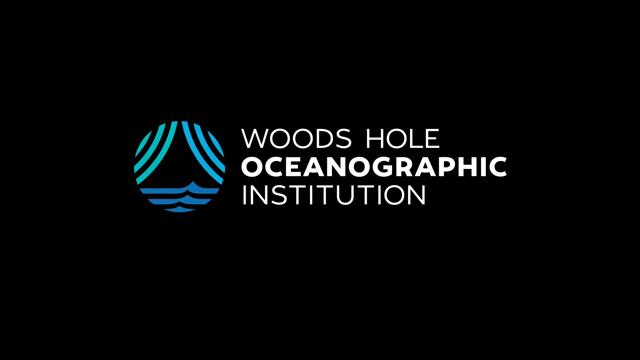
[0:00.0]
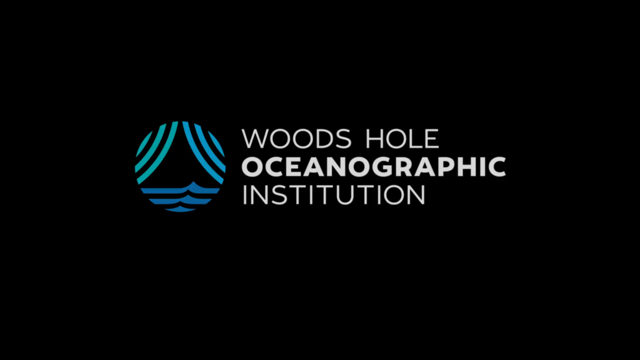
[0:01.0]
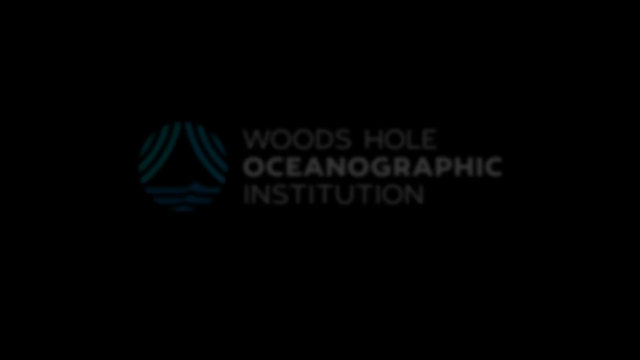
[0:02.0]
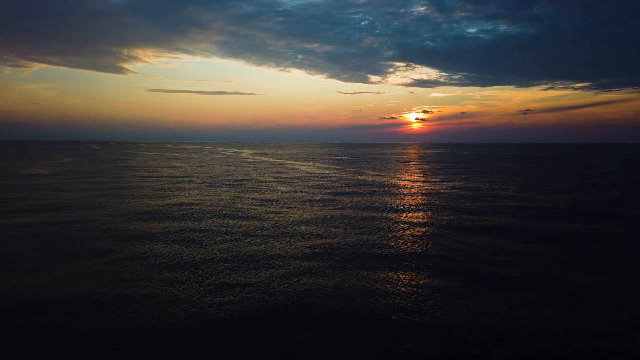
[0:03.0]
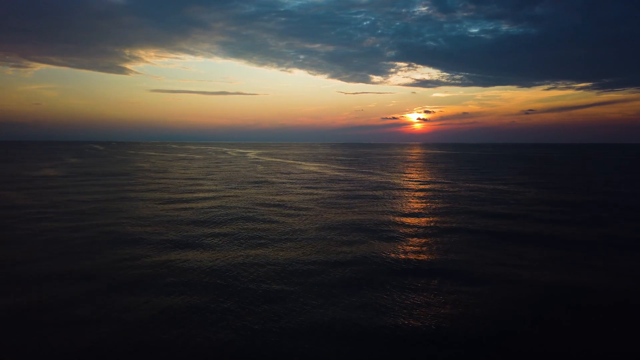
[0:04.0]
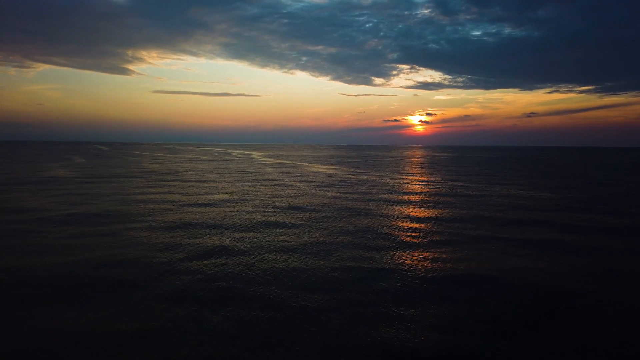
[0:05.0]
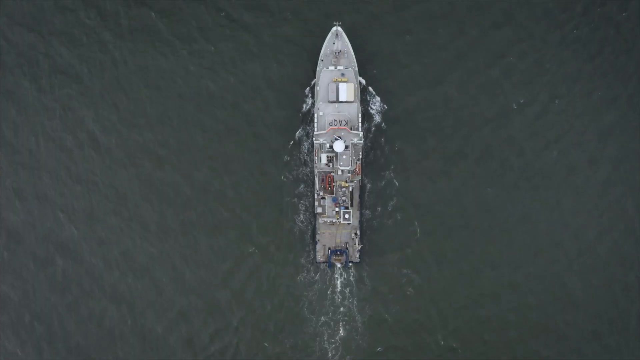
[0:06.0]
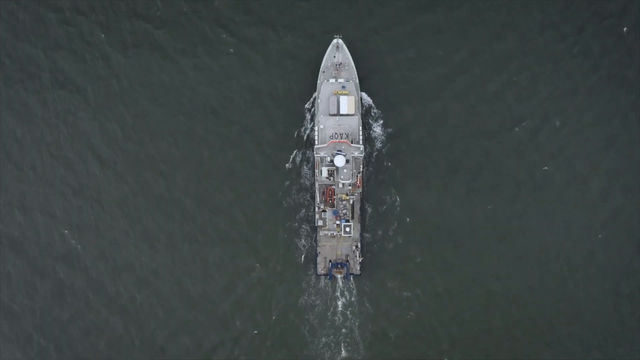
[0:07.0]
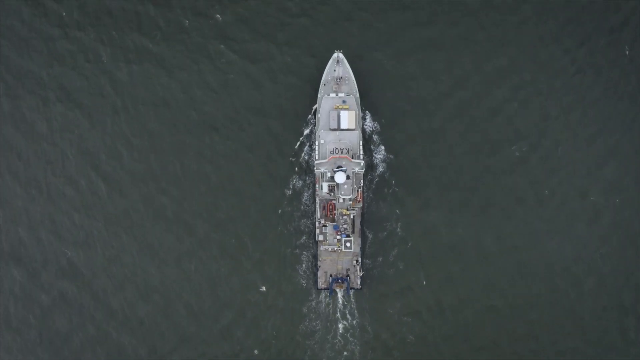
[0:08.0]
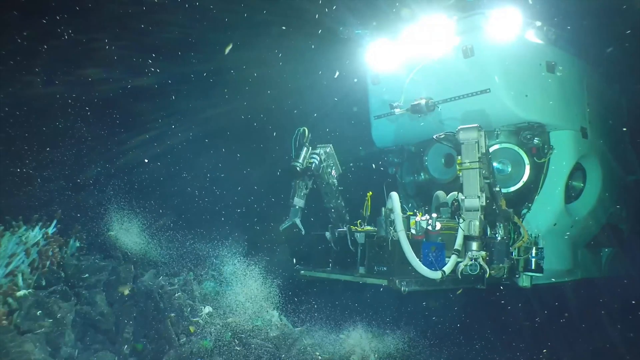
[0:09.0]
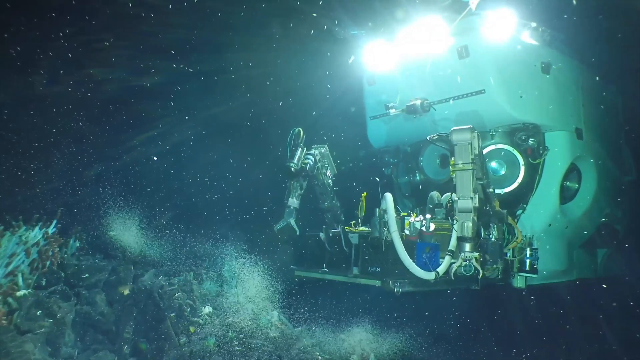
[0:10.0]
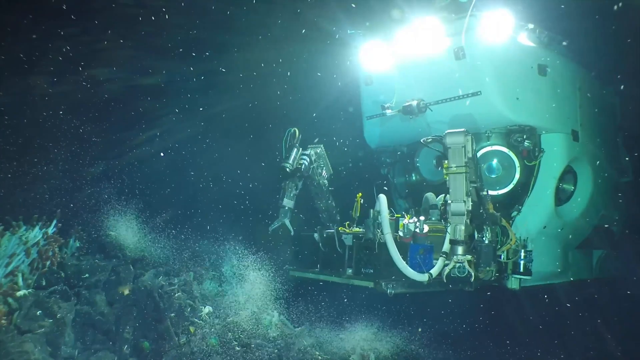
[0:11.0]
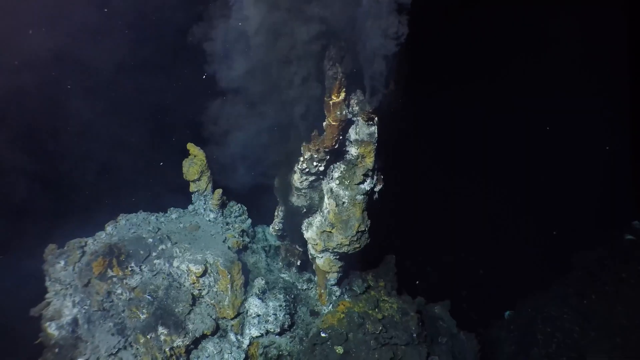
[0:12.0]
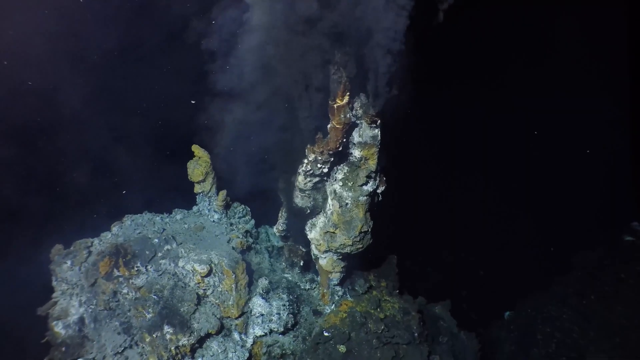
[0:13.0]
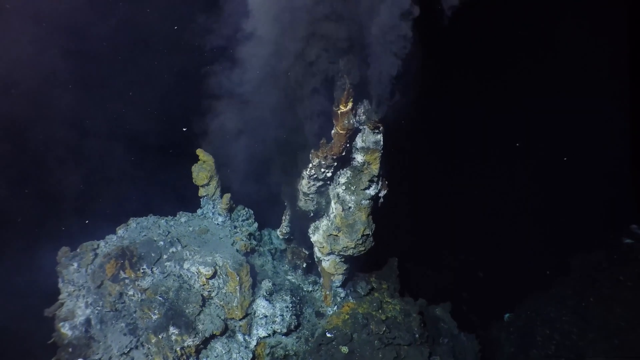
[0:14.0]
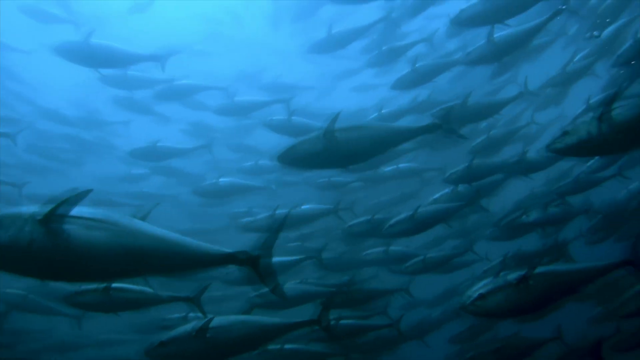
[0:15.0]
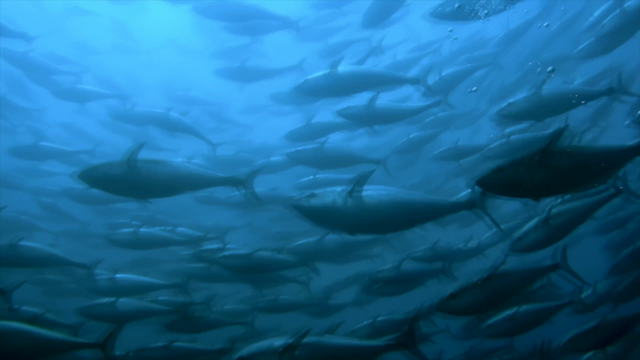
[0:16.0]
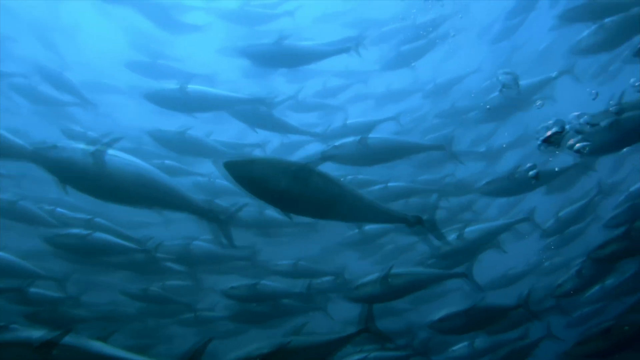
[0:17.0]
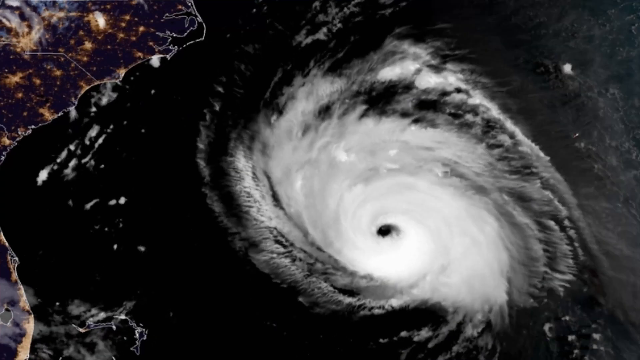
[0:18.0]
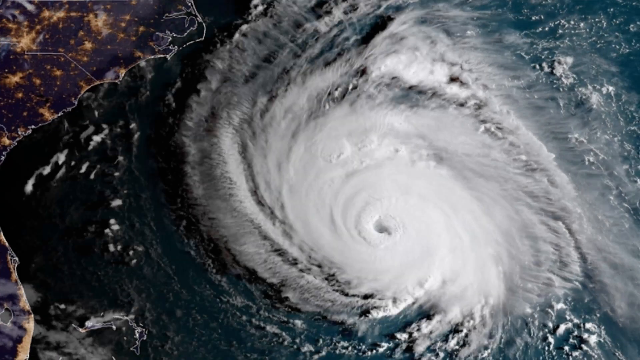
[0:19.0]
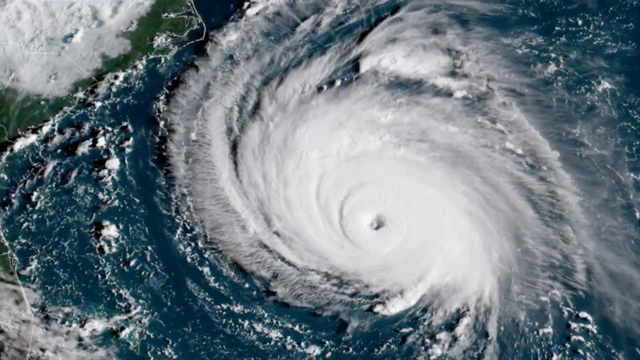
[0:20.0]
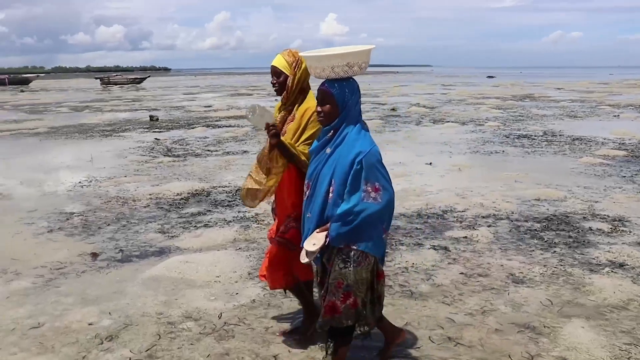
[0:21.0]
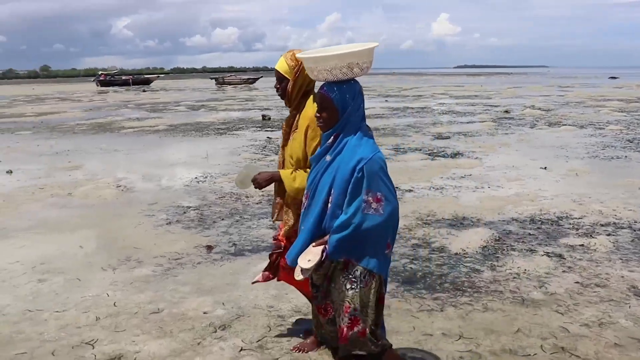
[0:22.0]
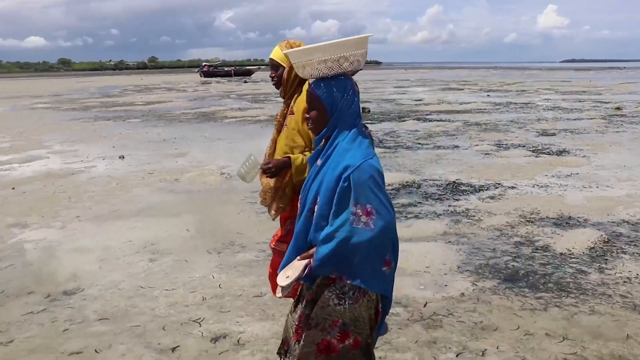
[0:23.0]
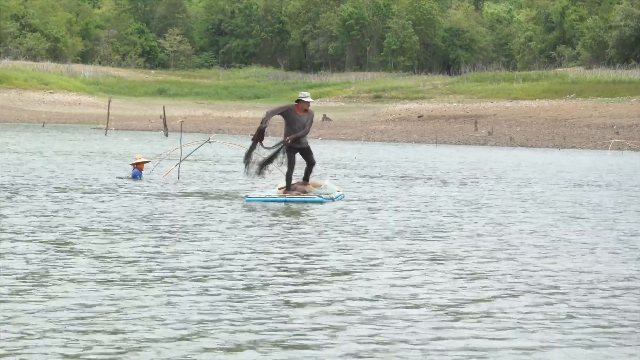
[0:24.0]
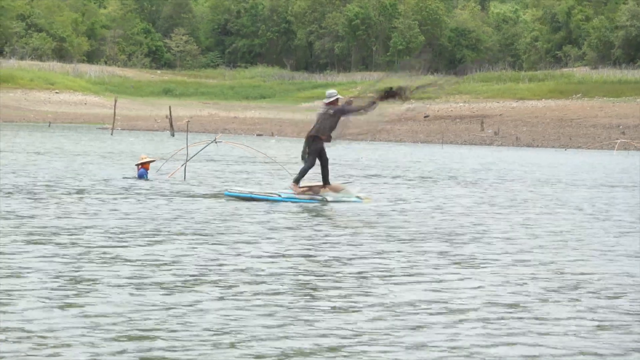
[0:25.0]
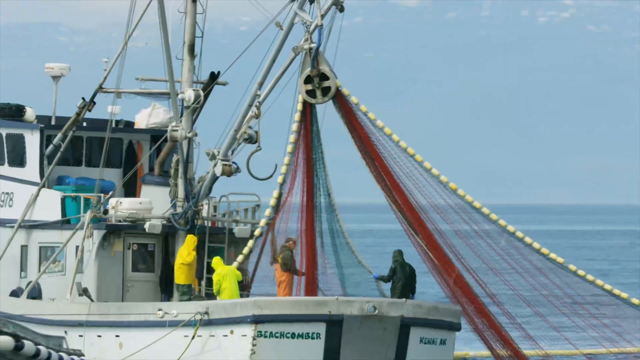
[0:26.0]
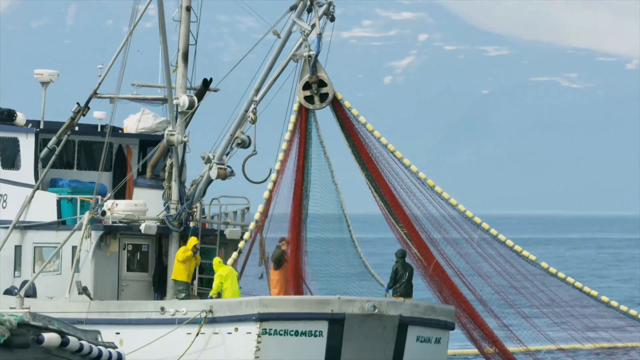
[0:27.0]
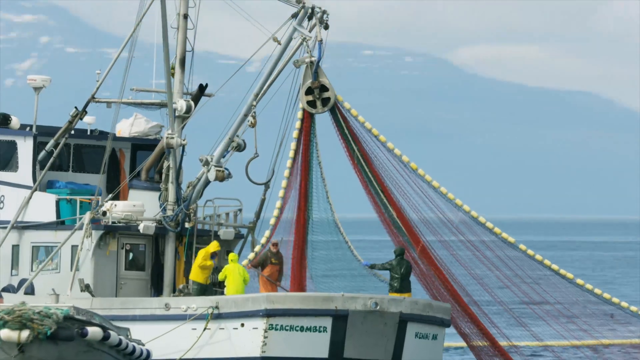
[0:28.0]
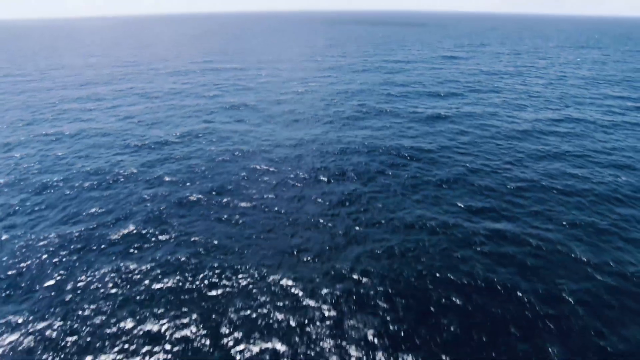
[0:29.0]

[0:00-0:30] A black background shows the heading "oceanography institution" with a design next to it. A scene of the sea, clouds and the sun follows, with green water and a boat on the water. A machine underground appears to be evaluating things underground. Many fish swim together in one area. An image shows a tornado inside the water, looking strong and striking. Two women appear, one dressed in blue attire and the other in yellow attire; the one in blue has a plate on top of her head. They are on a beach, sitting on the ground on the sand. The video then shows a man fishing in the middle of the sea, throwing his fishnet. The sea is shown in a detailed close-up view.